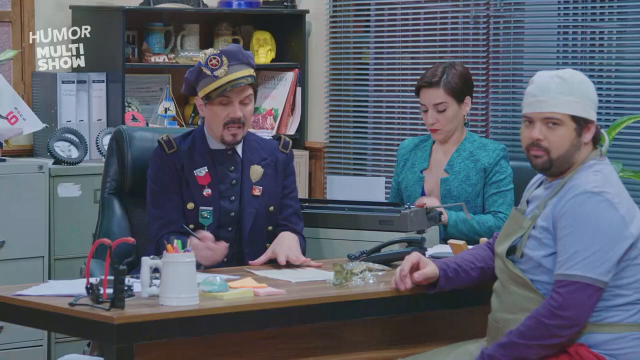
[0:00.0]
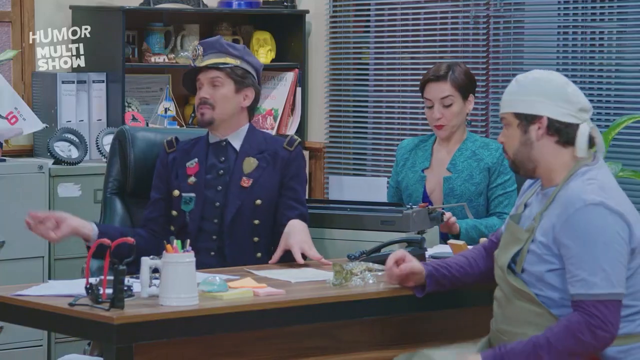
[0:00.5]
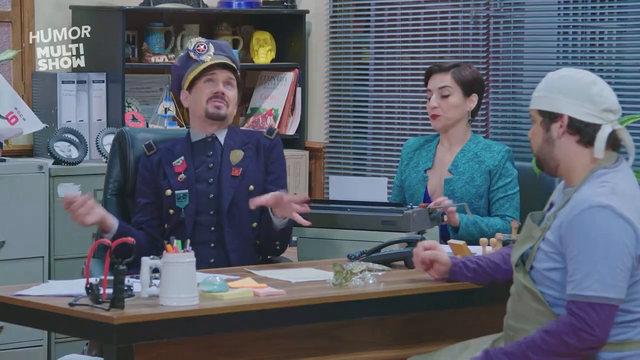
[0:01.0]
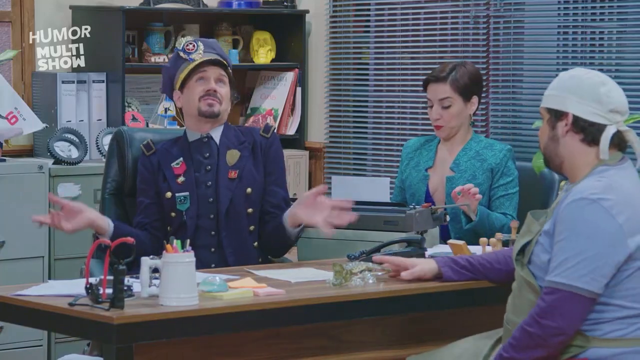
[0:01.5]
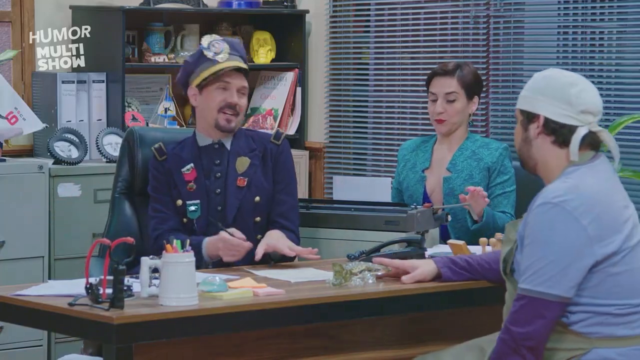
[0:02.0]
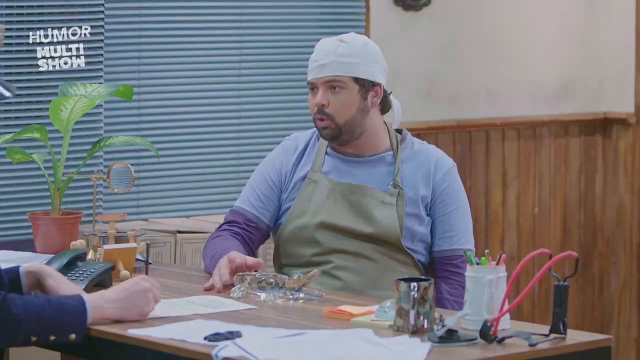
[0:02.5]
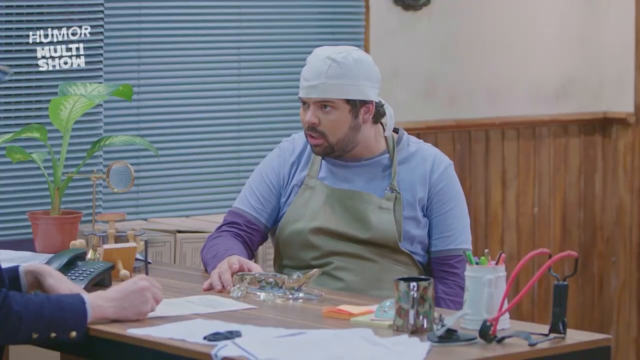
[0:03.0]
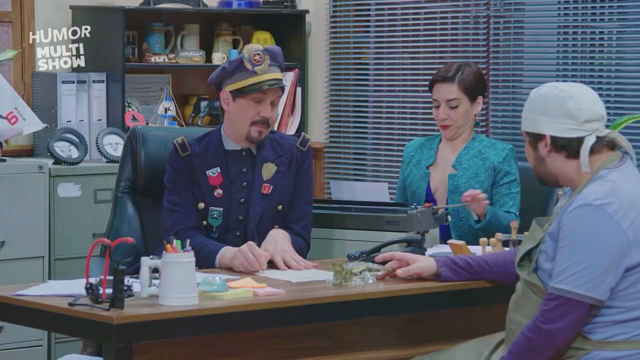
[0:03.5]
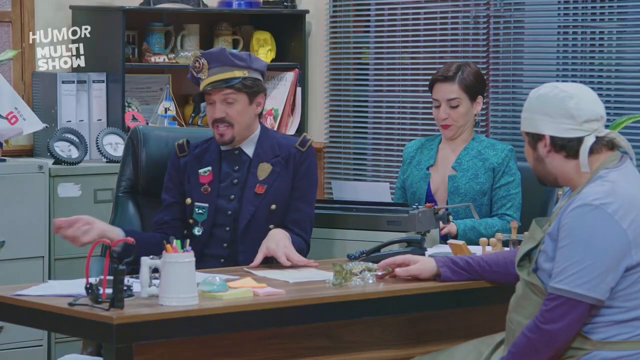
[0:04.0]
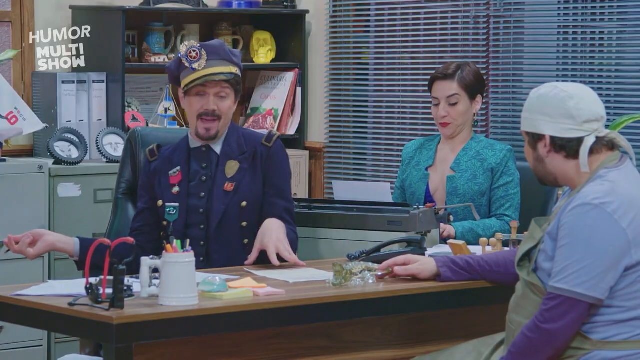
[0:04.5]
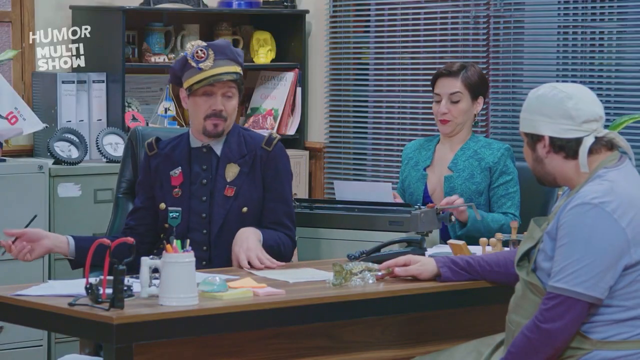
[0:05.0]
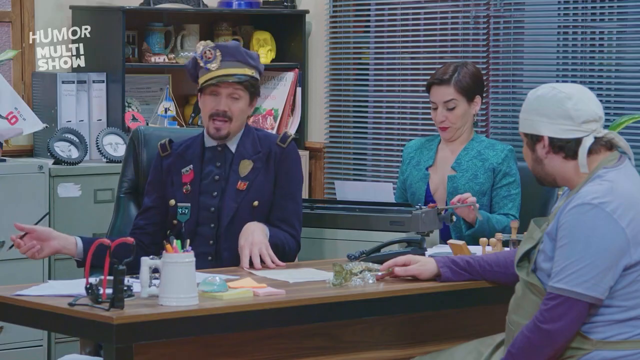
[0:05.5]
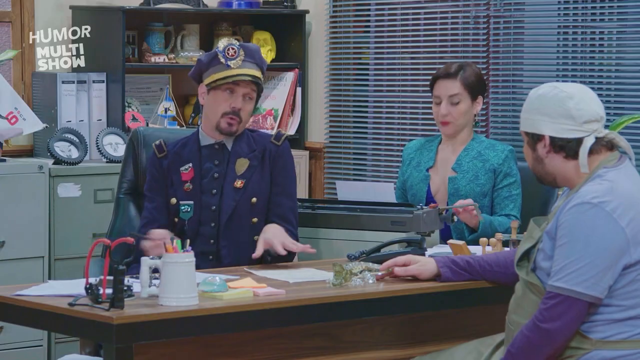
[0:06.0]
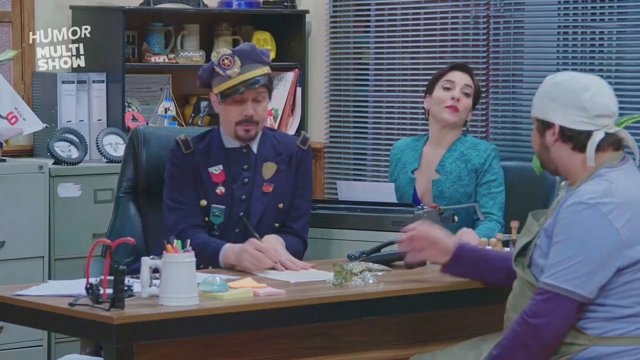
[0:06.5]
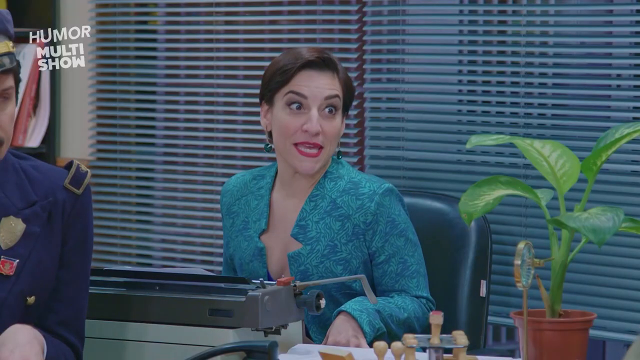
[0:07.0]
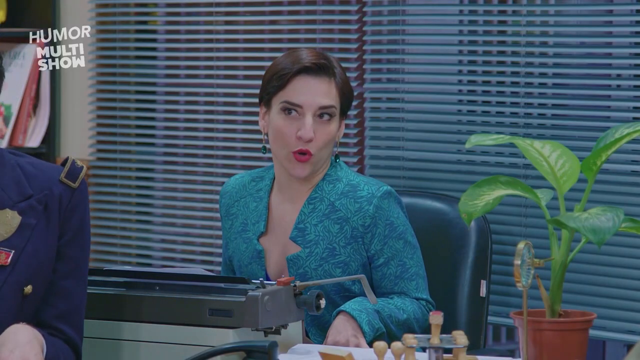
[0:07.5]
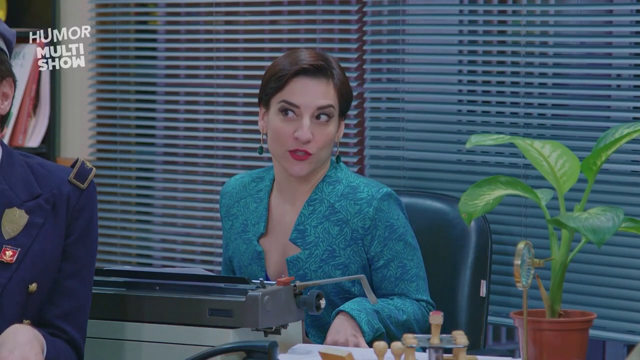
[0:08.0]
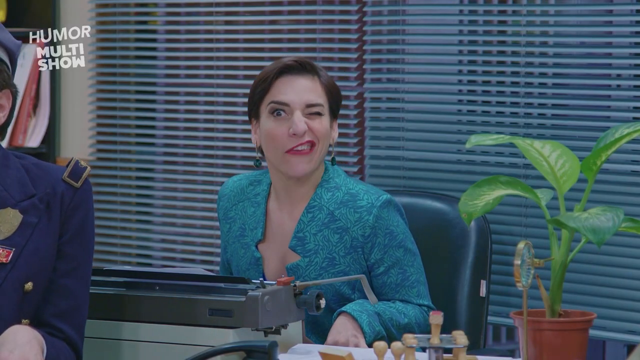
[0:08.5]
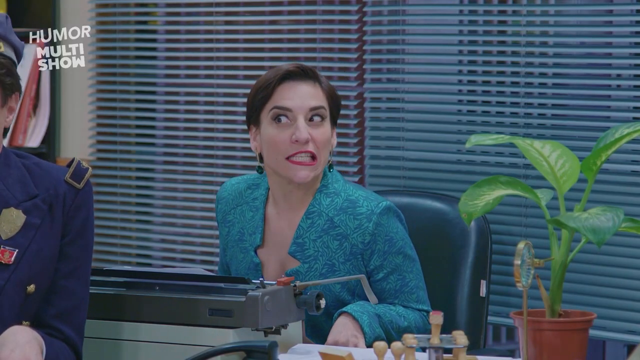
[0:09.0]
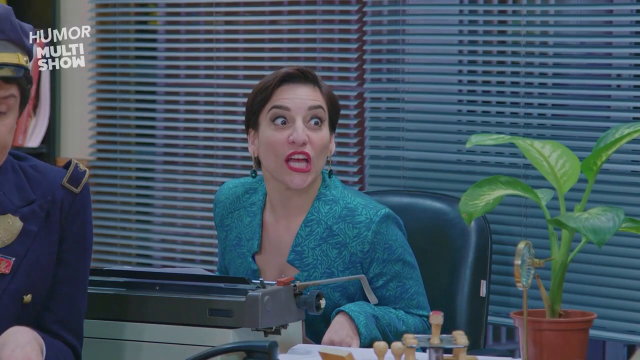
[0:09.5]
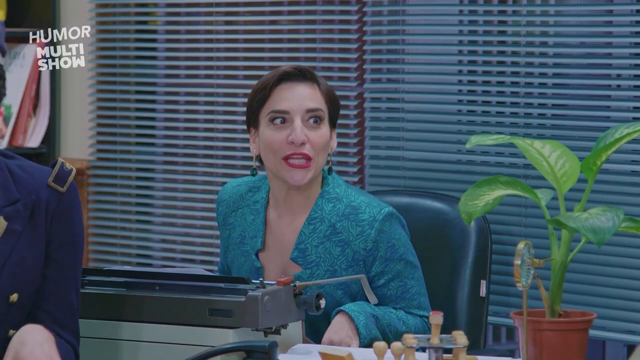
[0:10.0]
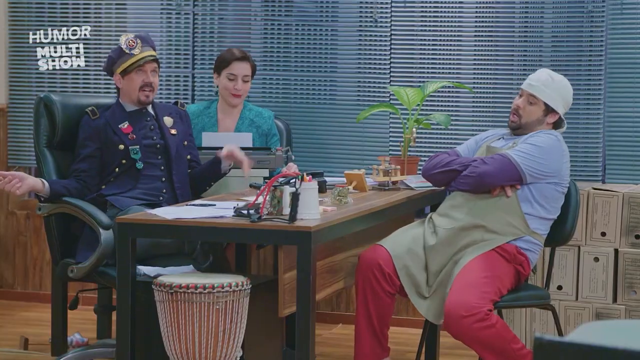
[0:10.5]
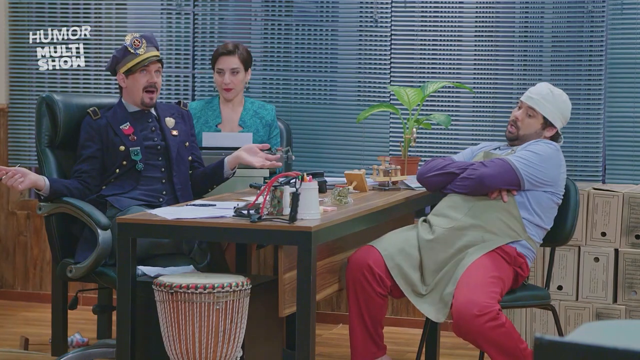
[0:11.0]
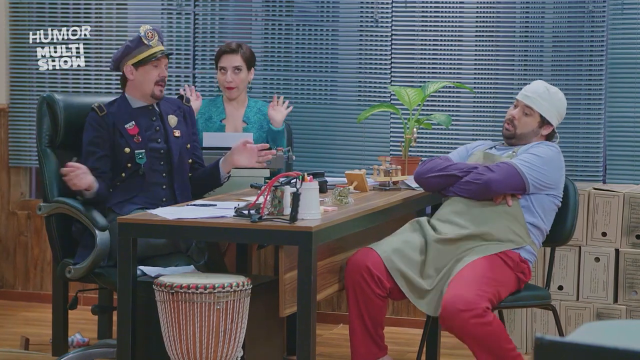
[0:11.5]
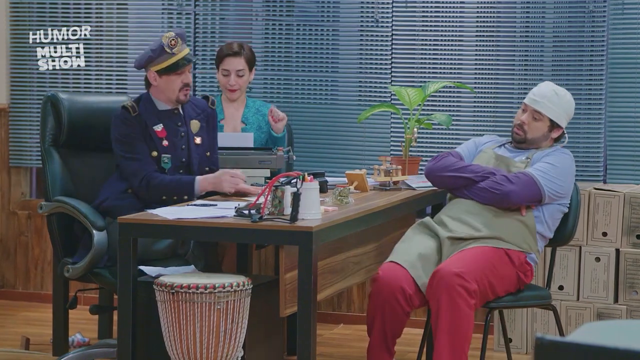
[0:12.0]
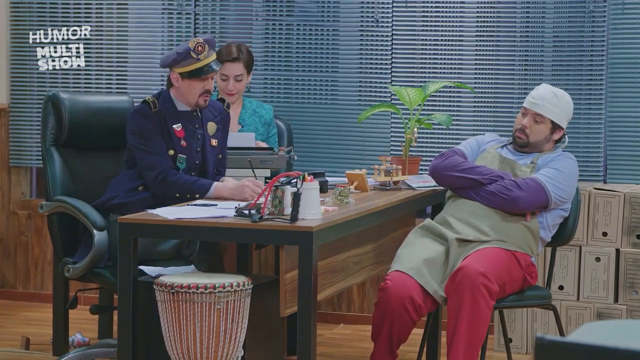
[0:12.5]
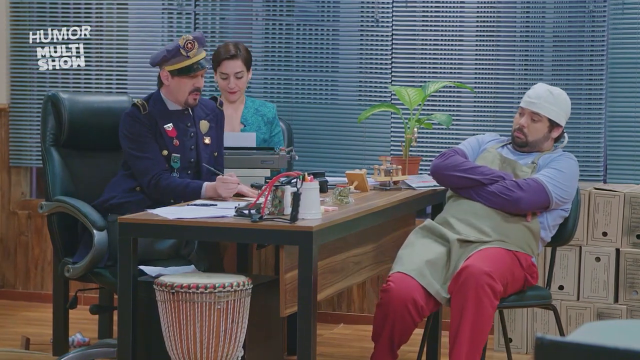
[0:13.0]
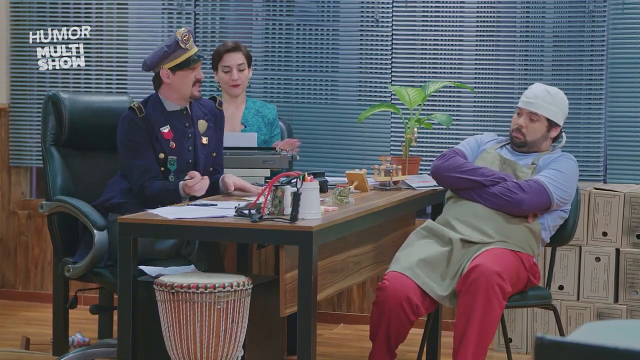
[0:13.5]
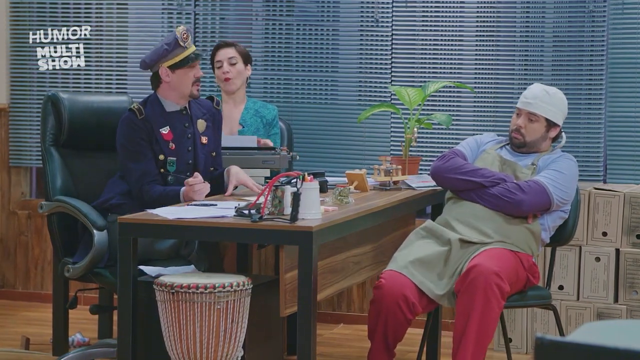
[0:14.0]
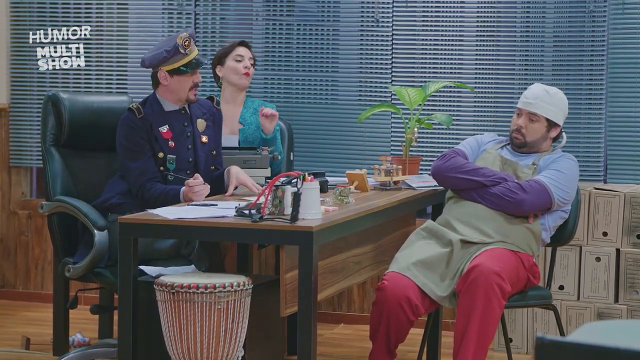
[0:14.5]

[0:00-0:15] The show is Humor Multishow. Three people are in an office: one man sits at one side of a small table, another man is on the other side, and a lady towards the back is typing. The man doing the talking, seated in the office, wears a blue suit or blue military suit with various medals on it. There is a bongo at the end of the table. Across the table is a very chubby man in a surgeon's cap; he looks like he has on two shirts, along with pink pants and some kind of apron. The young lady at the side with the old-fashioned typewriter is making funny faces. She has short dark hair and wears a green suit jacket that is mostly open, with a bit of exposure in the front. A set of blinds is right behind them, and there appear to be cabinet shelves with lots of cups on them.